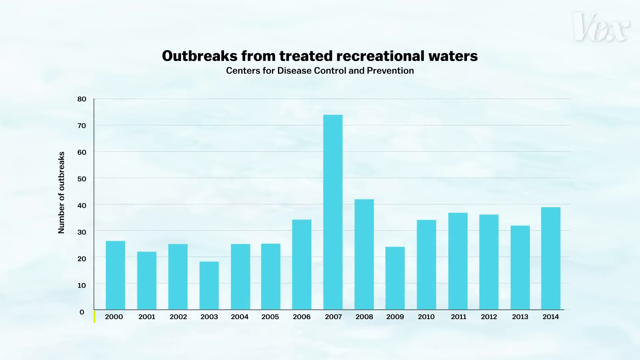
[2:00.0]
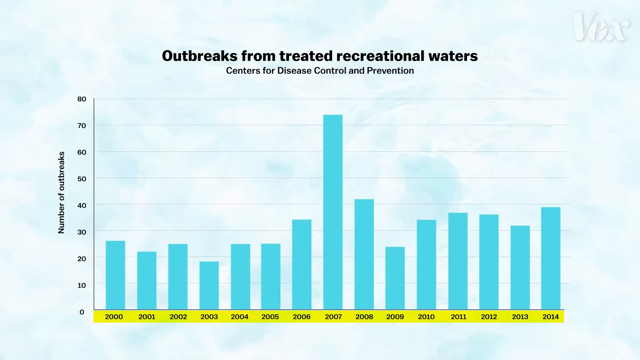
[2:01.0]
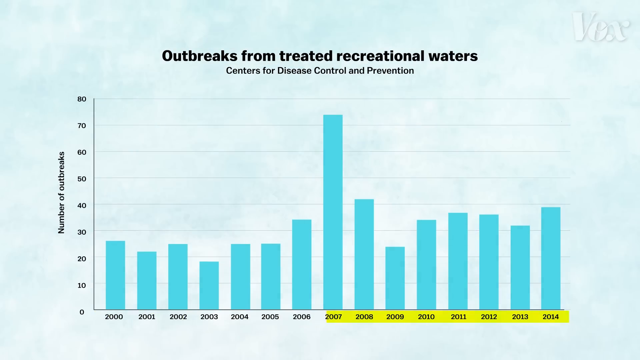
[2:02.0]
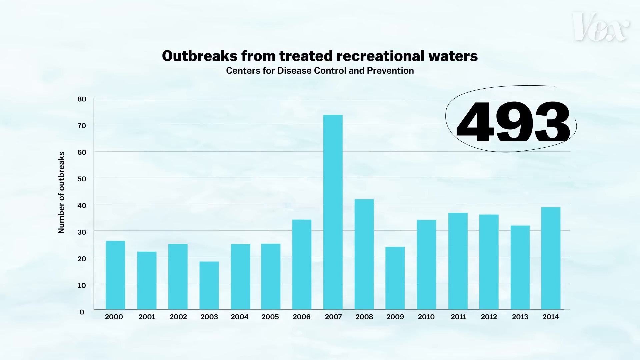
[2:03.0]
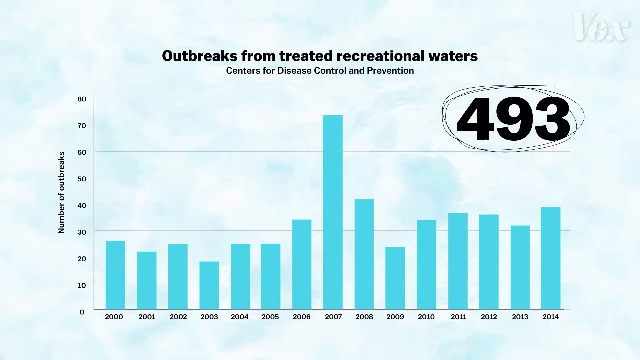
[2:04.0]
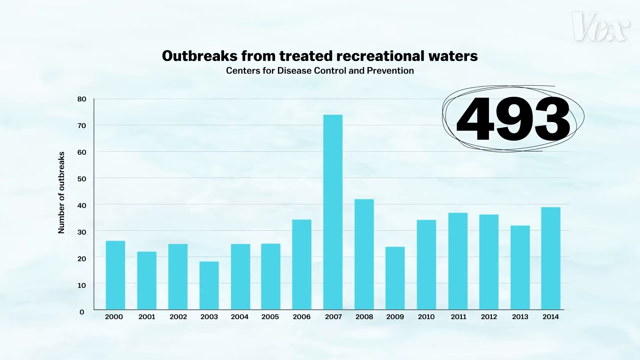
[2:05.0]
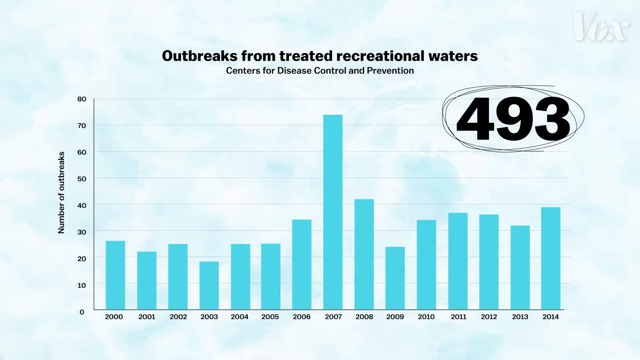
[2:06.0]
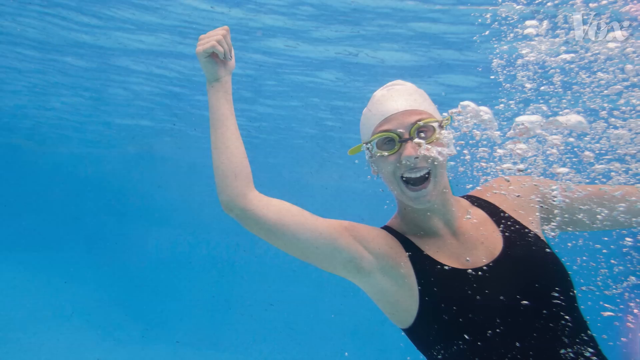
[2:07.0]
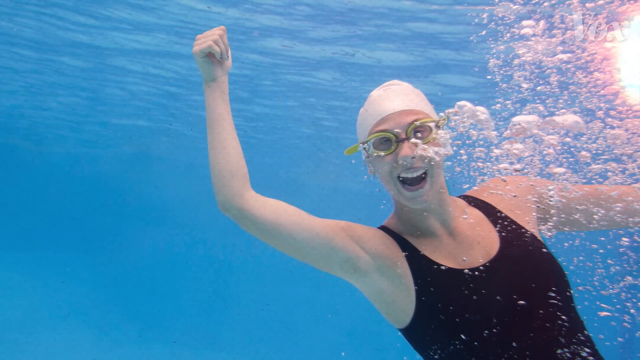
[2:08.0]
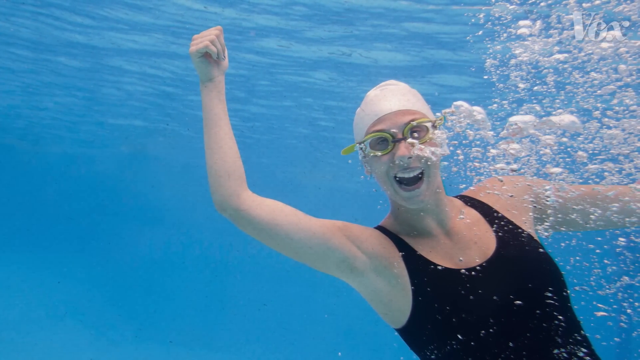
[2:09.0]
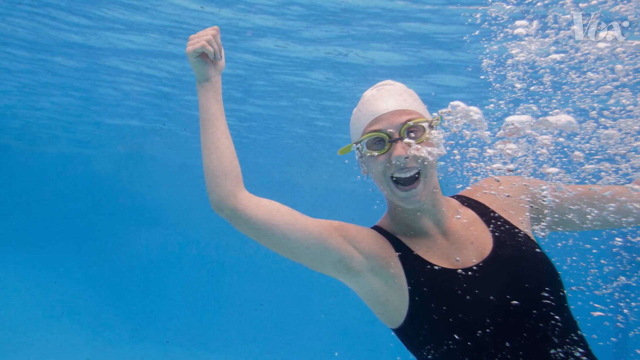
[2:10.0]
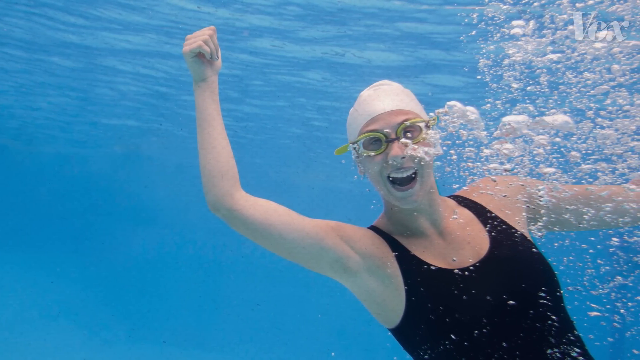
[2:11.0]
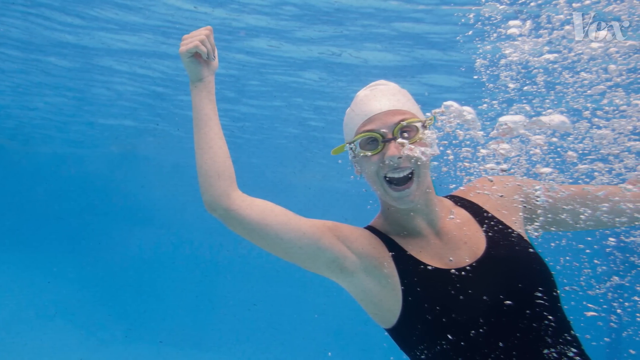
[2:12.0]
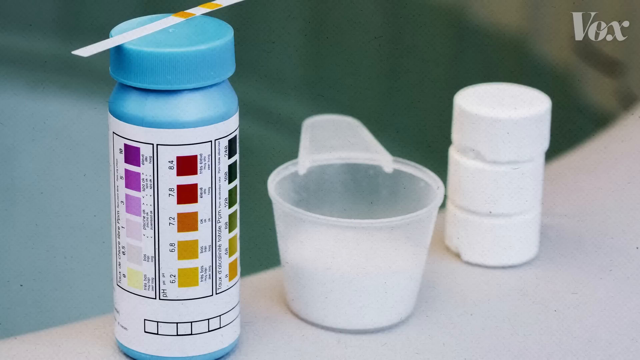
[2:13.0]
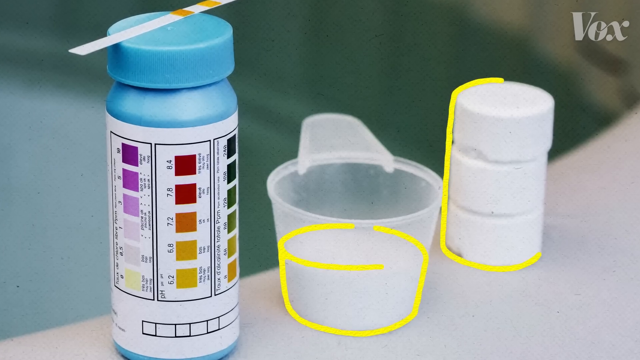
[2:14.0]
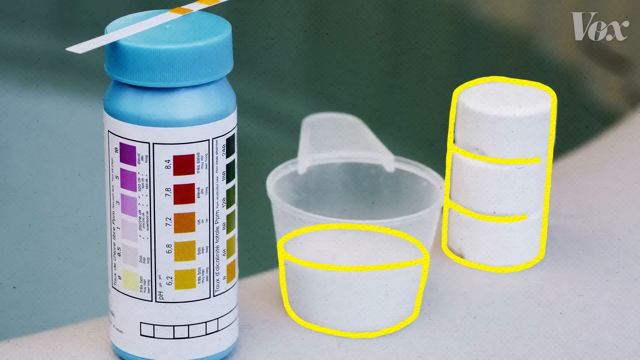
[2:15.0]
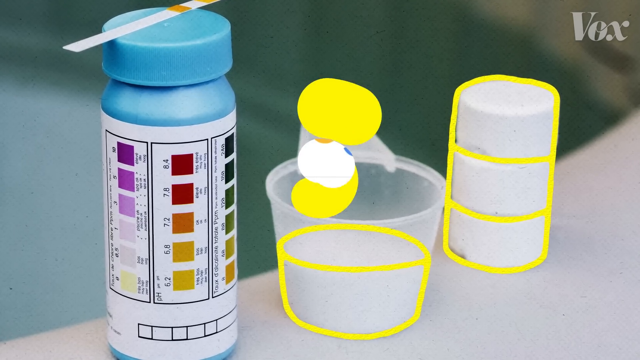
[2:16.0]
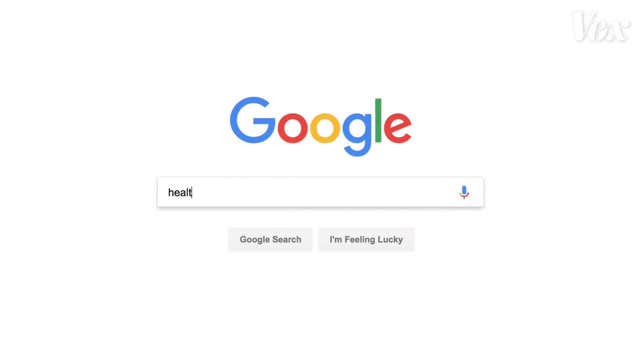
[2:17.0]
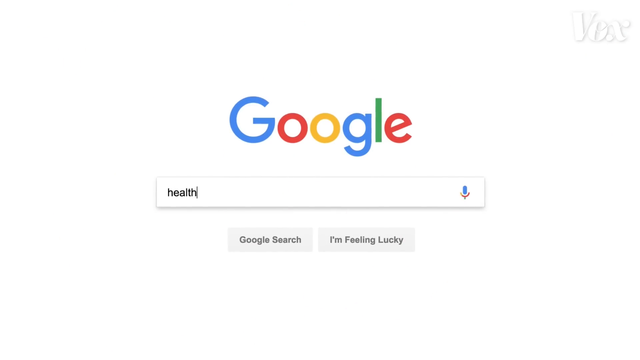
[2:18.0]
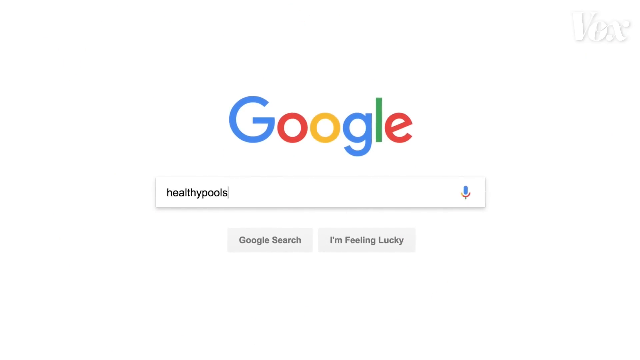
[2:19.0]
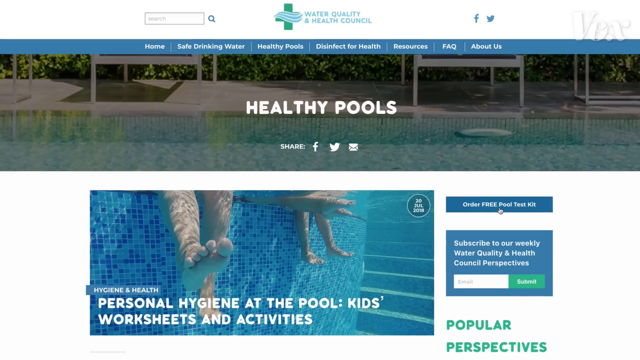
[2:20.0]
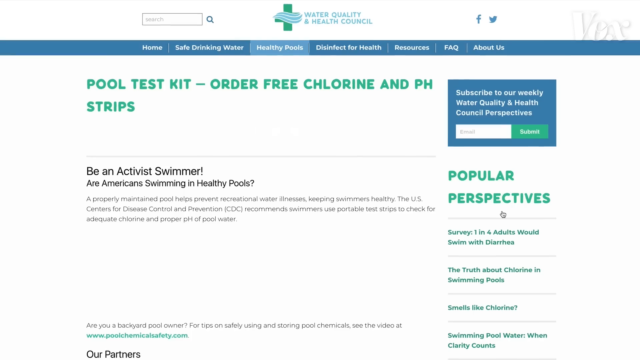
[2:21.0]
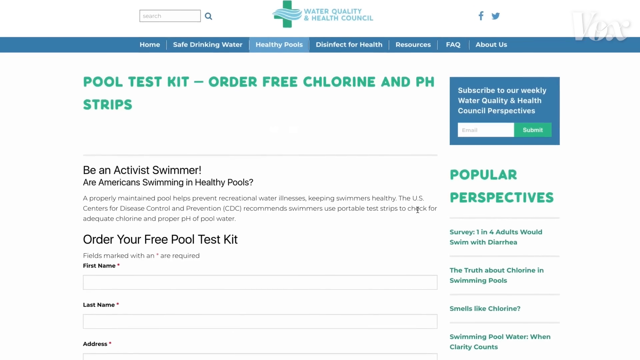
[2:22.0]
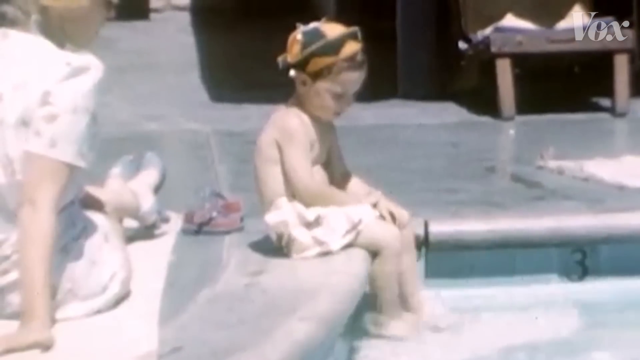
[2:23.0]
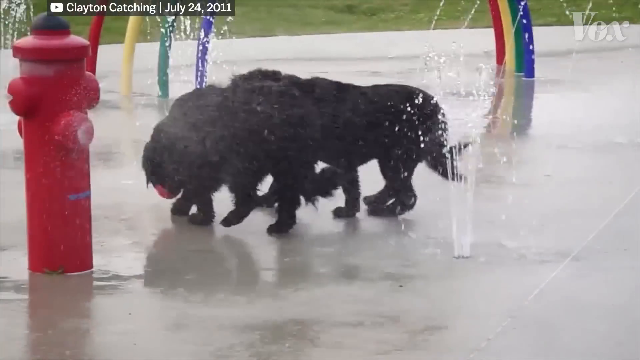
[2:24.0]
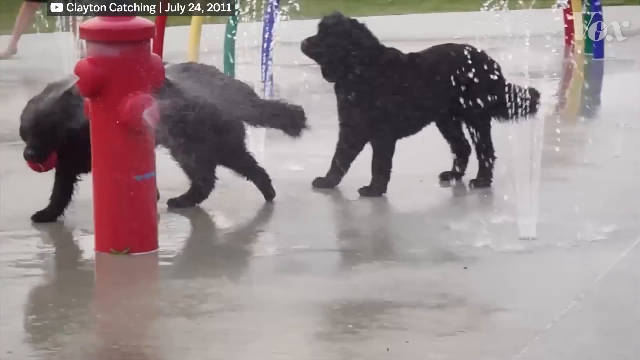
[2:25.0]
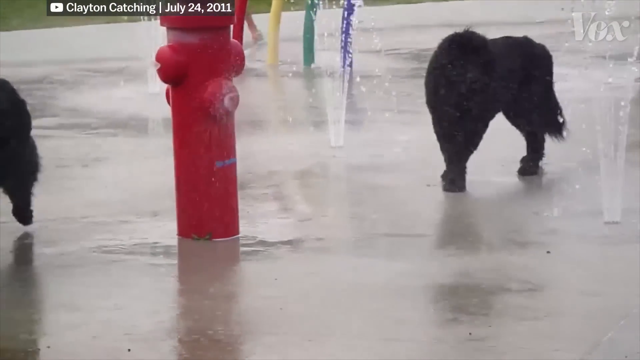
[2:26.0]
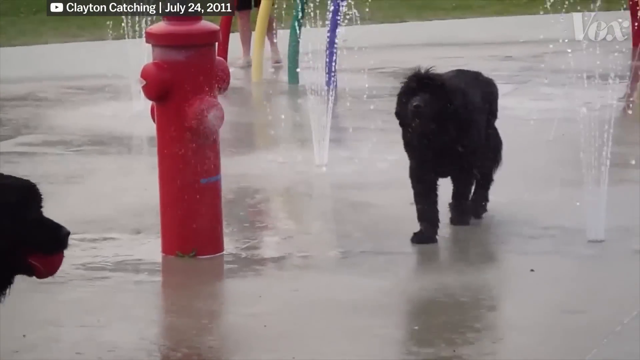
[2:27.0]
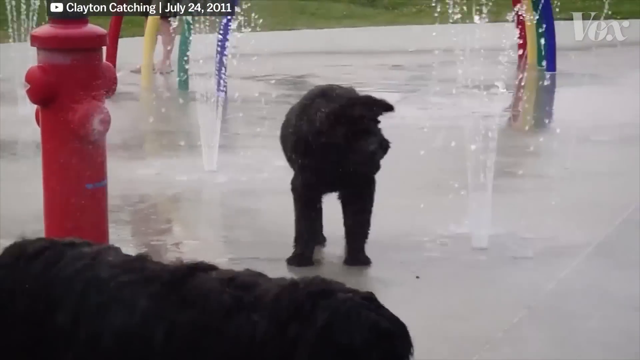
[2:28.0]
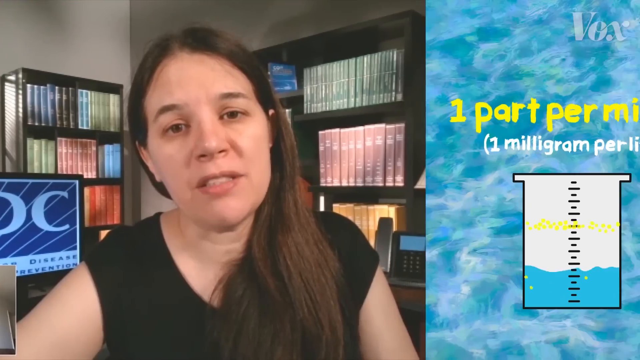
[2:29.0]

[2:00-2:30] A chart titled "outbreaks from treated recreational waters" with "Centers for Disease Control and Prevention" shows the number of outbreaks on the left and the years from 2000 to 2014 along the bottom. In the top right corner is the number "493," circled. Next, a woman underwater in a black bathing suit lifts her right hand in a fist as if in triumph; she wears yellow goggles and a white cap and smiles, with bubbles coming from her nose. What looks like a water test follows: a blue bottle on the left with different color matches on it and the tester lying on top, what looks to be a scoop in the middle, and a canister on the right. A Google screen shows someone typing "healthypools.org," and the Healthy Pools site opens, reading "Pool Test Kit, Order Free, Chlorine and pH Strips." A little kid sits at the edge of the pool kicking his feet in the water, with possibly his mother sitting right next to him. Two dogs play by a red fire hydrant in the water. The video then returns to the woman from the CDC speaking toward the camera.